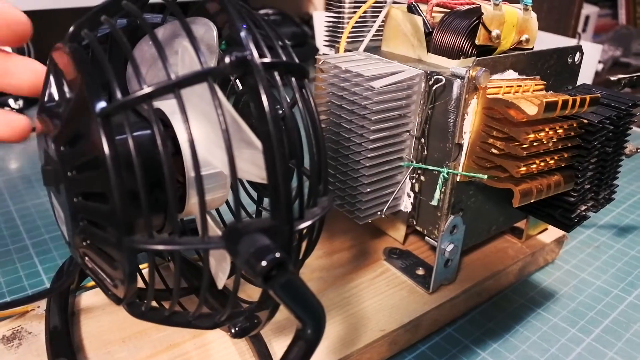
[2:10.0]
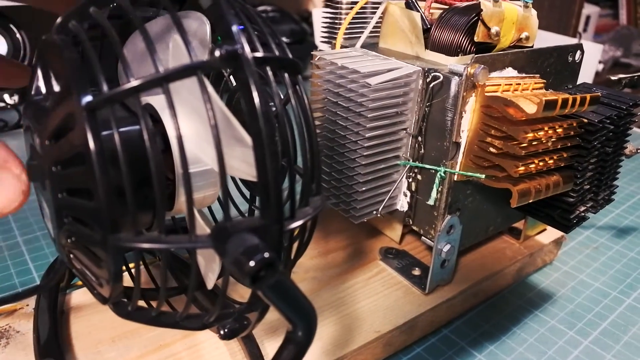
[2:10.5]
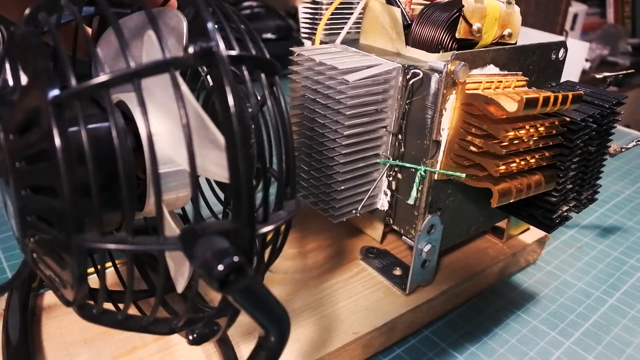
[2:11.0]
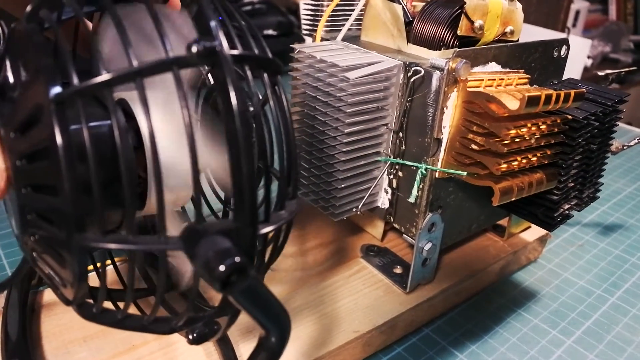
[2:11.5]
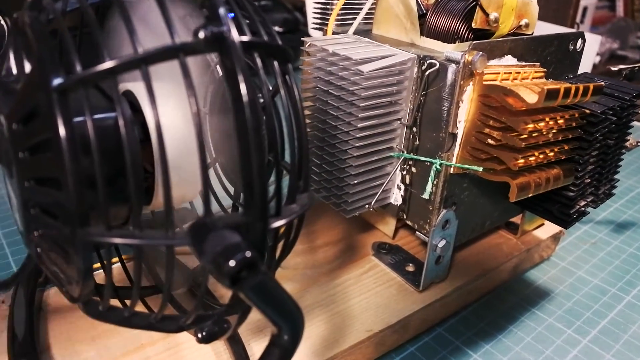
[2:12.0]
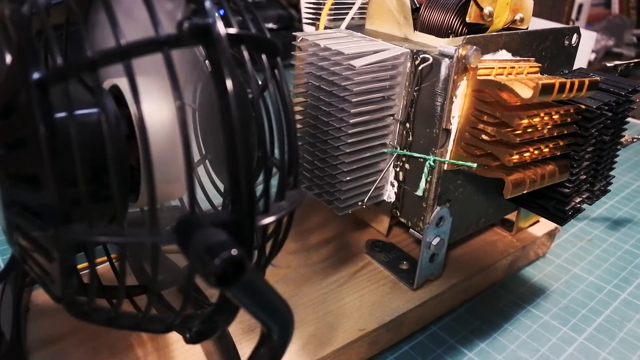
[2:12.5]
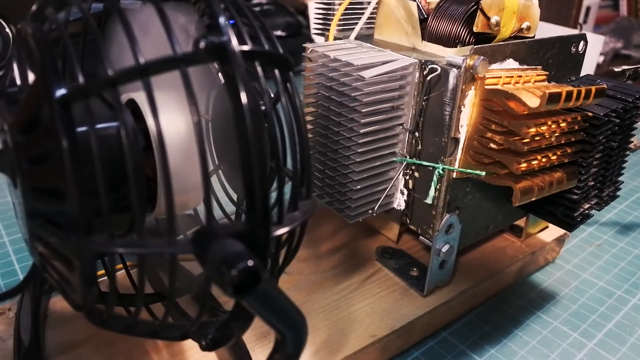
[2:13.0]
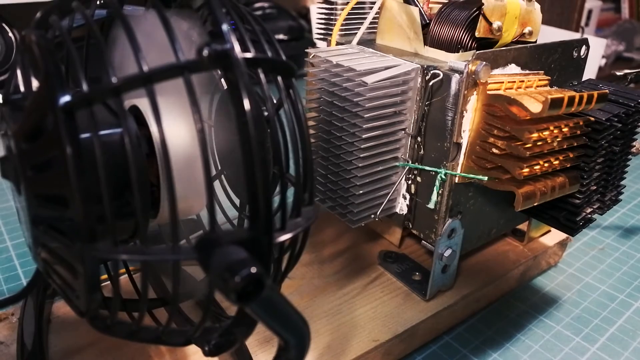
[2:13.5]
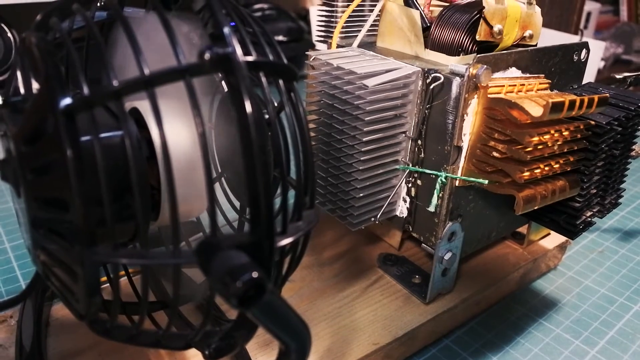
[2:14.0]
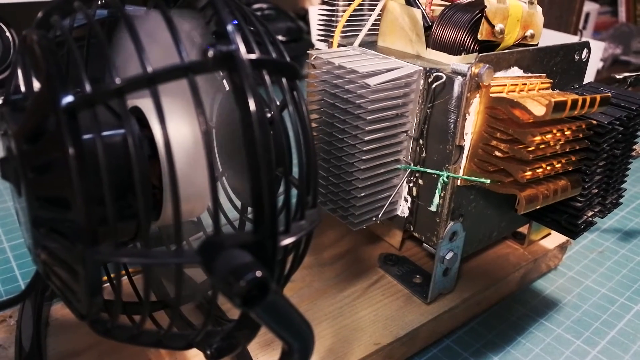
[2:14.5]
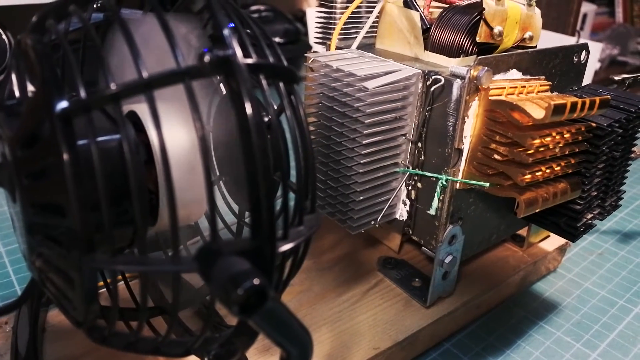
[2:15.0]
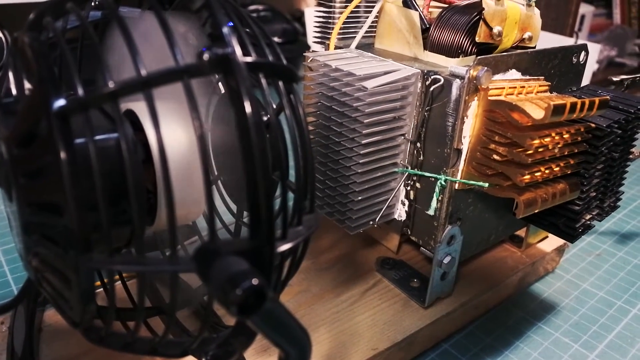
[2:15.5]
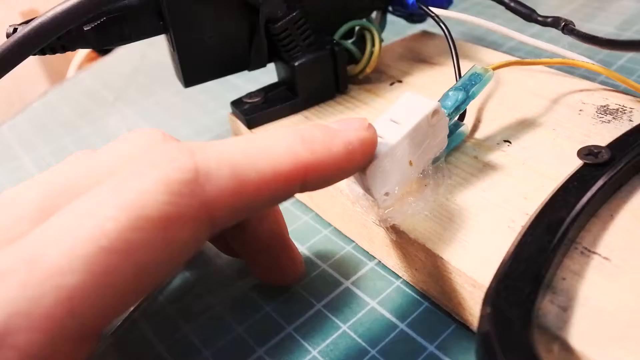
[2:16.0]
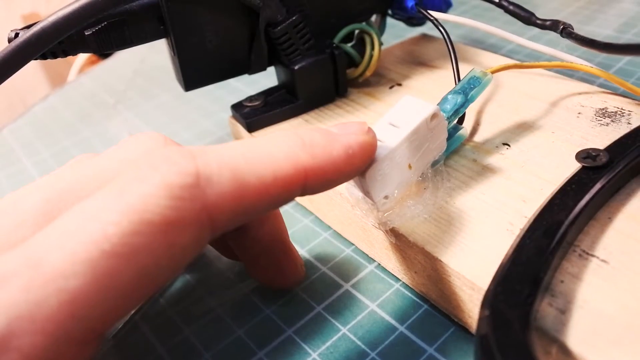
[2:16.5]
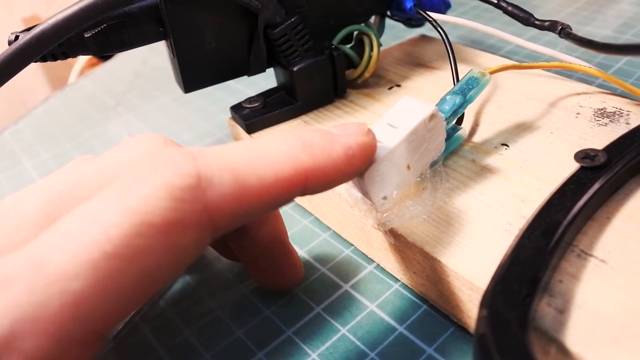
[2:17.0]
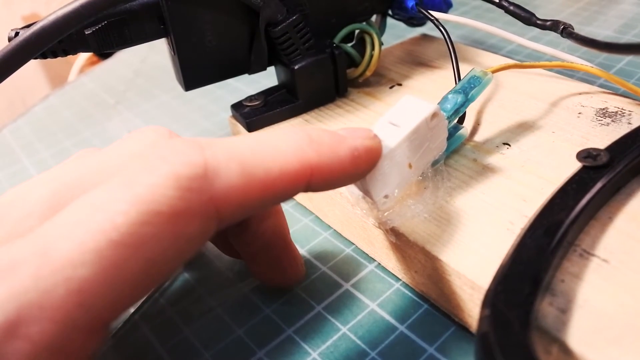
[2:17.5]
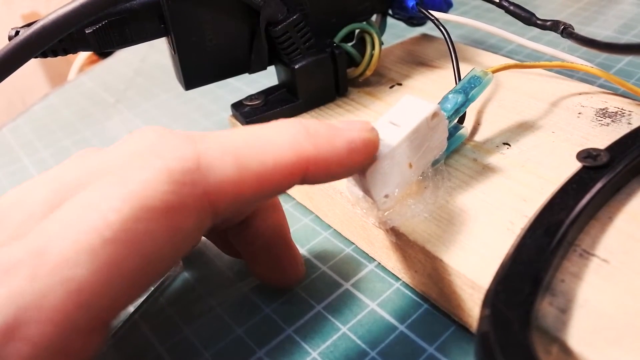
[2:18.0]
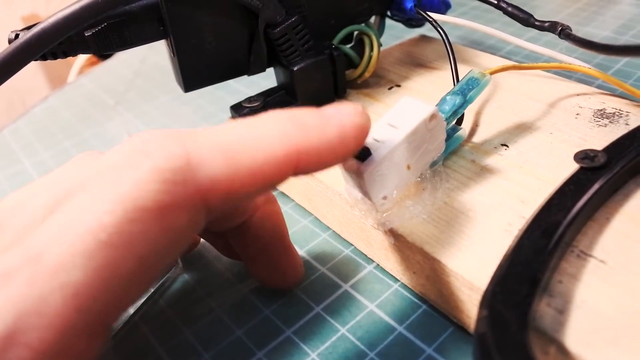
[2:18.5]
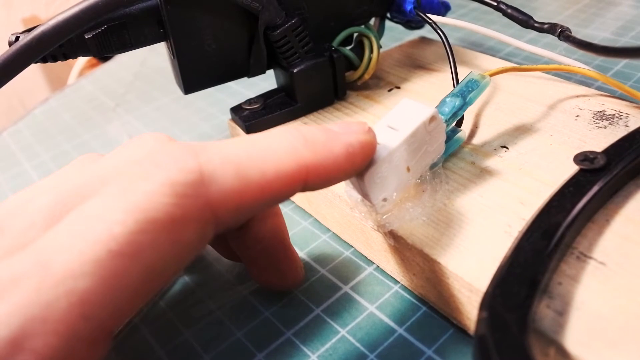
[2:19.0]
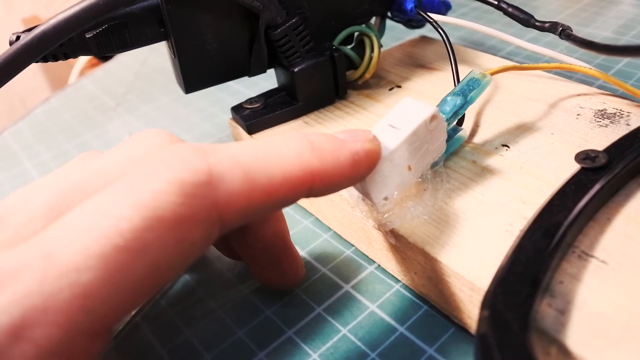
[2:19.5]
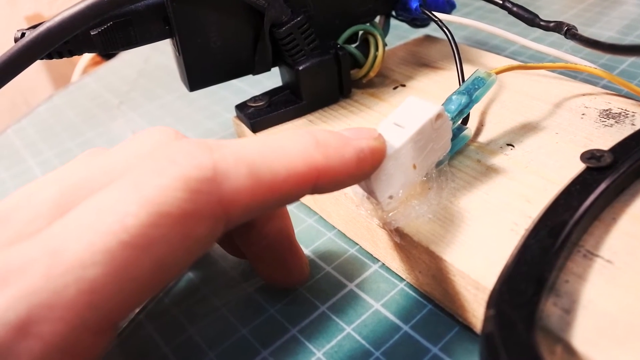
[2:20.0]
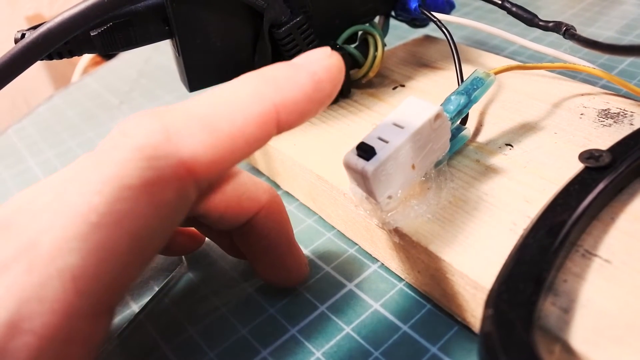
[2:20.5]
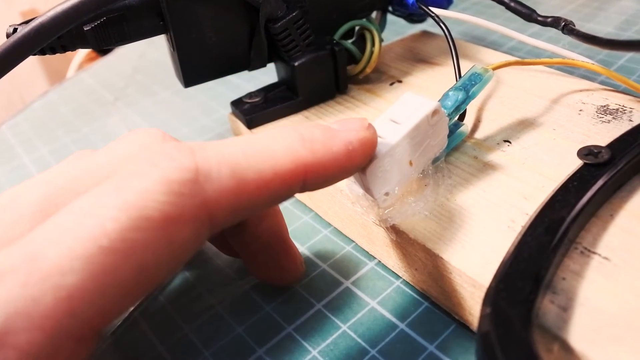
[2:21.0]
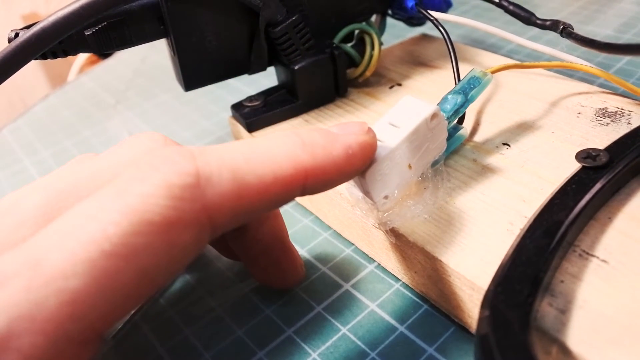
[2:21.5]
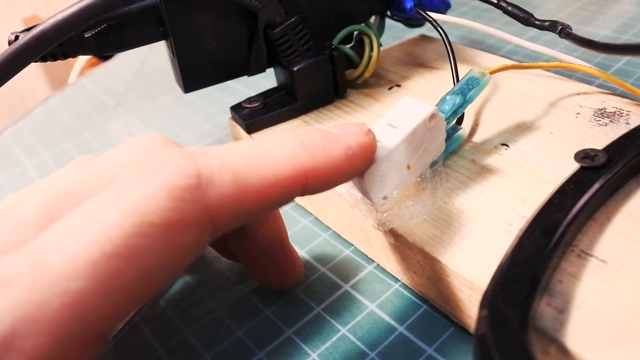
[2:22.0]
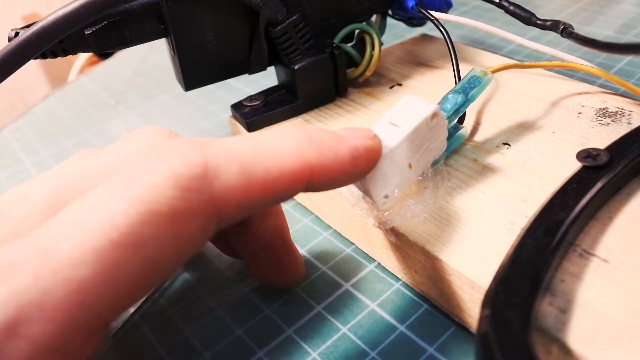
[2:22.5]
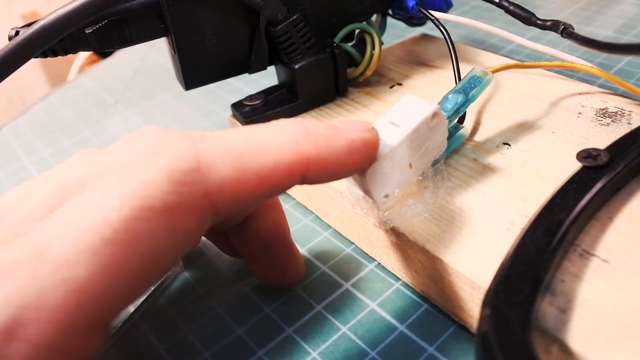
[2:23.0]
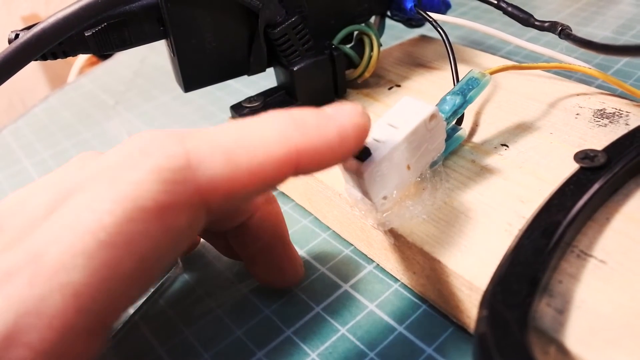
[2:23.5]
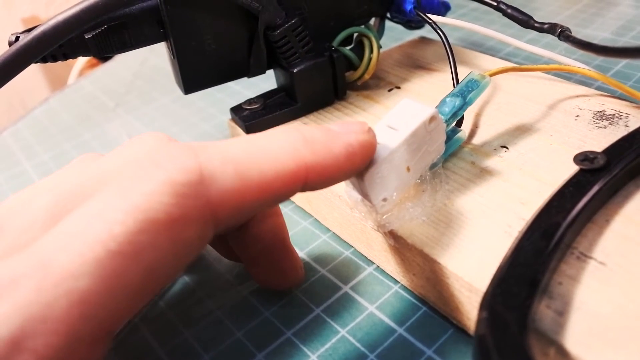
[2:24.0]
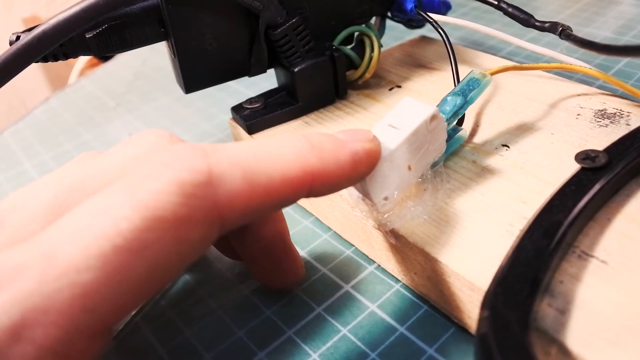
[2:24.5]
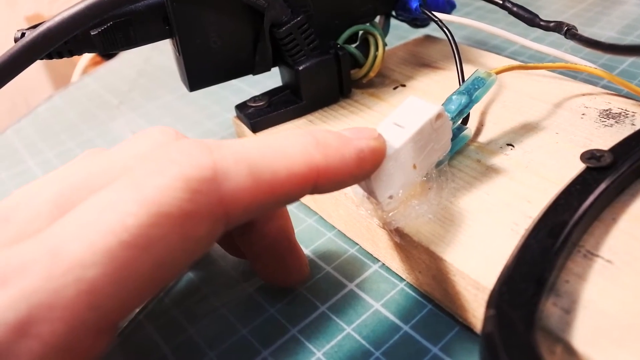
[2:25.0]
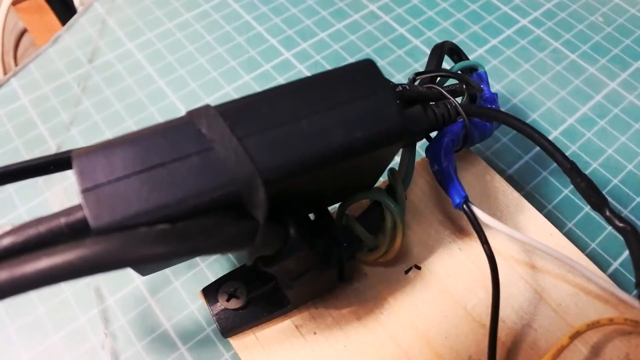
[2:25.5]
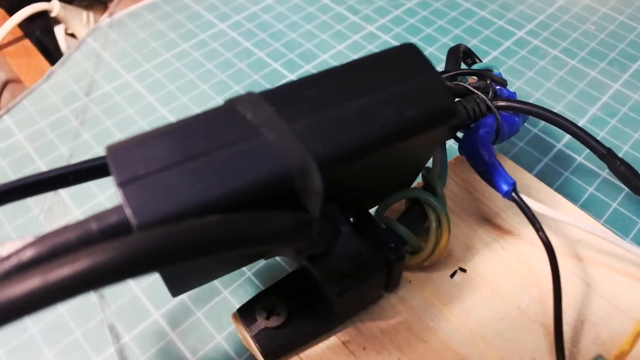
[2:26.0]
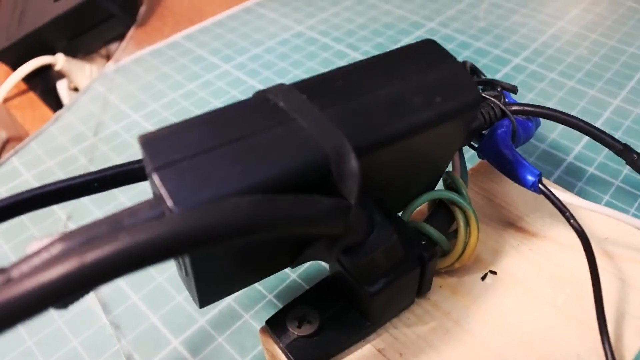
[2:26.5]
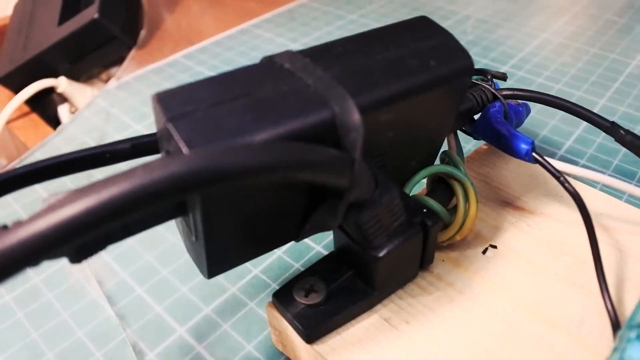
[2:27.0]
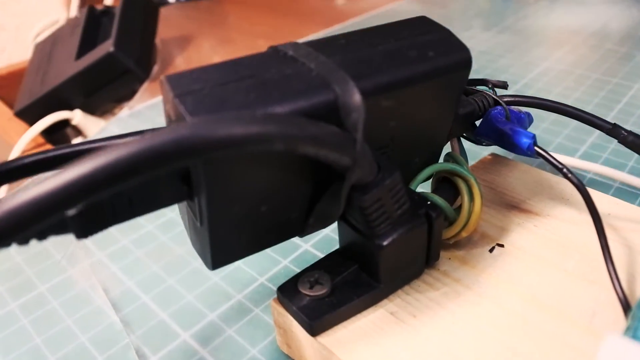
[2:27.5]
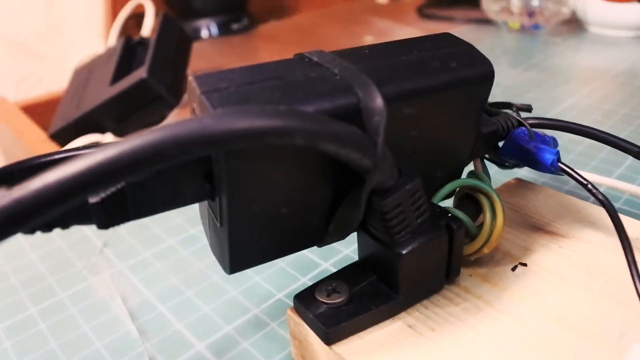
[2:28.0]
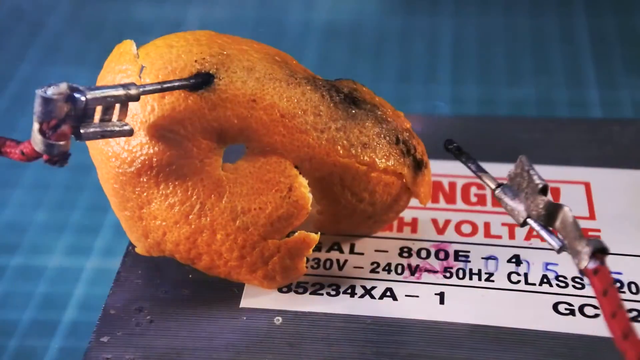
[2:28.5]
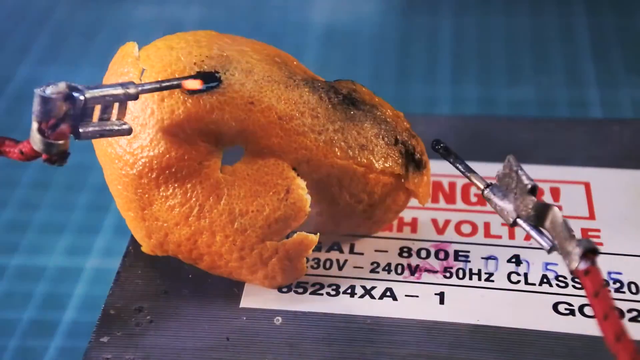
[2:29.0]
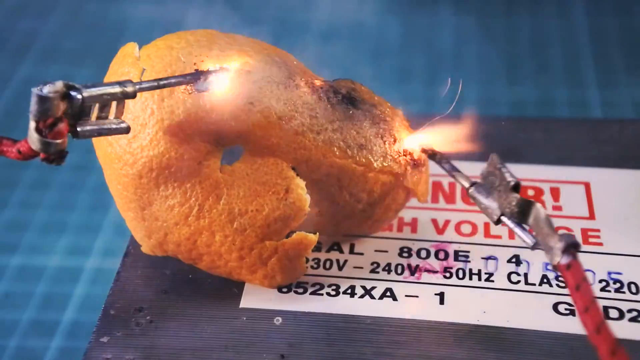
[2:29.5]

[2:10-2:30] What may be a new machine is shown, and the fan starts, apparently to cool the working electronic components. There is a push-button system, possibly to start the machine or to turn another part on or off. When they touch what might be an orange peel, it sparks and burns it, showing there is electricity in the assembled pieces. The piece looks very clean.